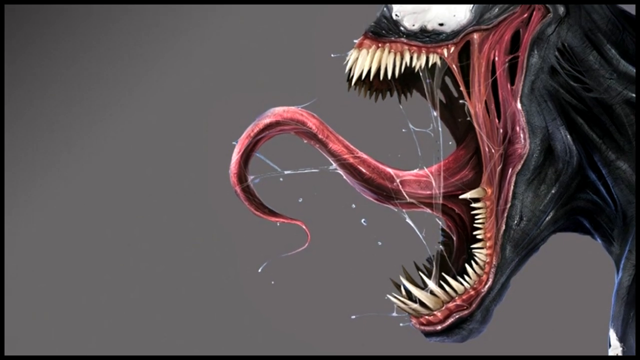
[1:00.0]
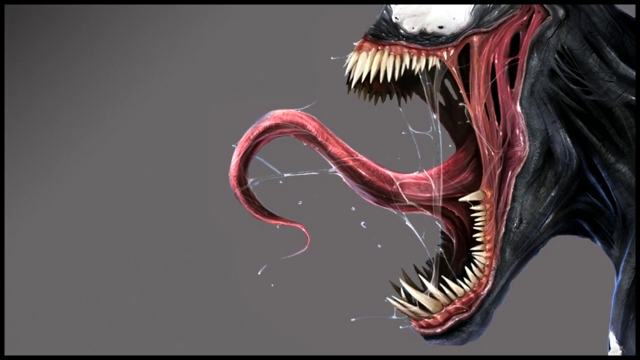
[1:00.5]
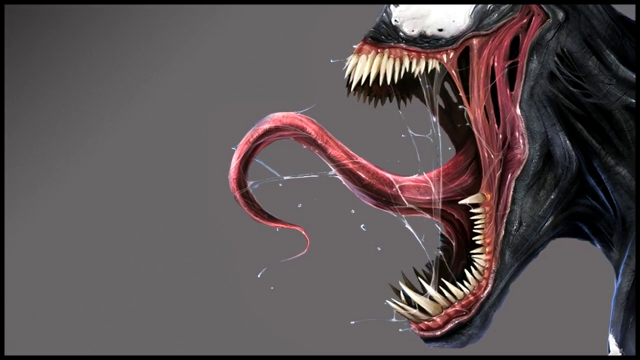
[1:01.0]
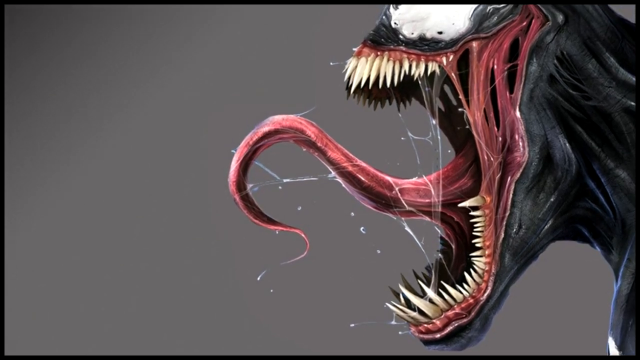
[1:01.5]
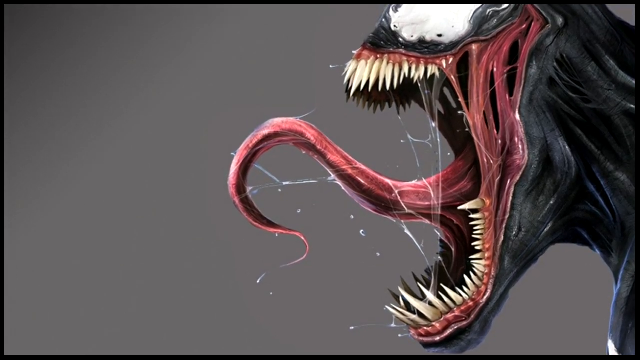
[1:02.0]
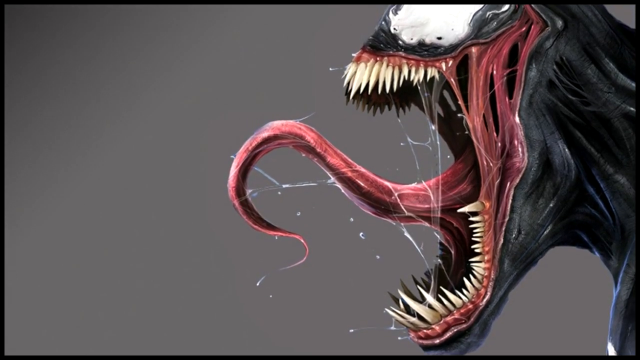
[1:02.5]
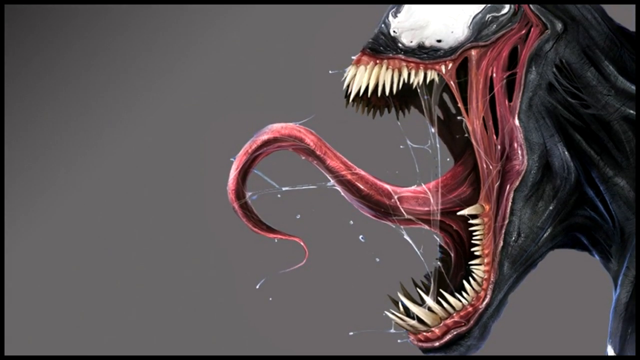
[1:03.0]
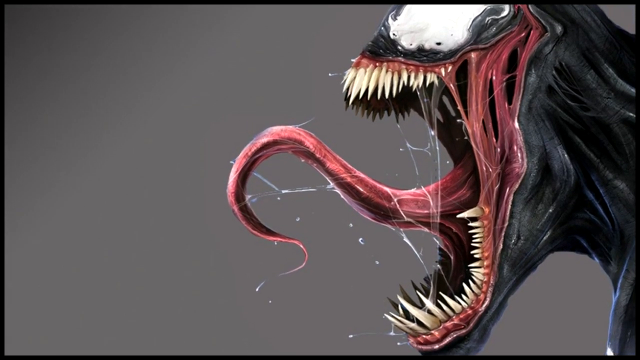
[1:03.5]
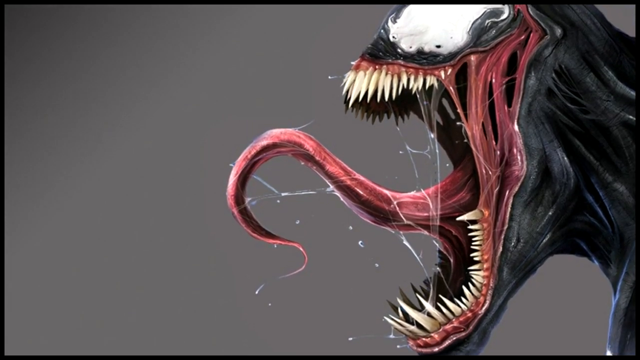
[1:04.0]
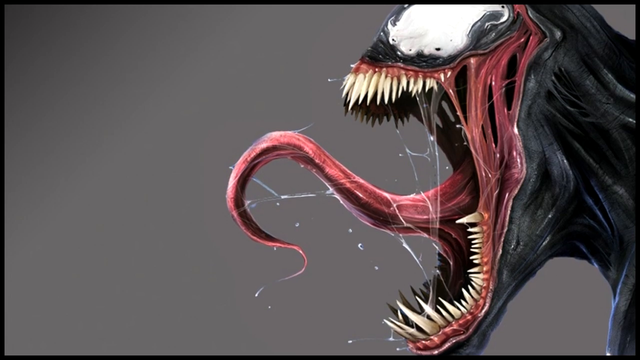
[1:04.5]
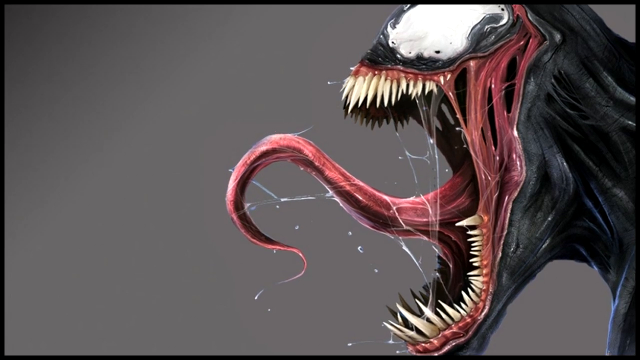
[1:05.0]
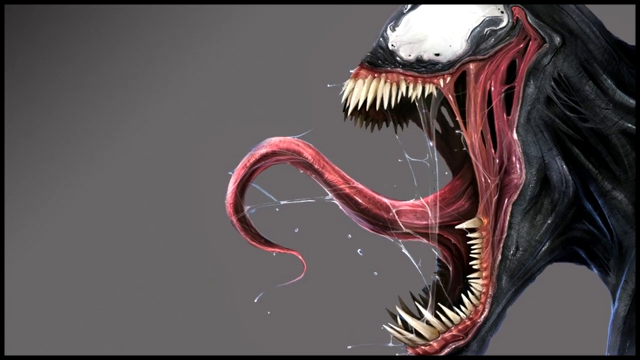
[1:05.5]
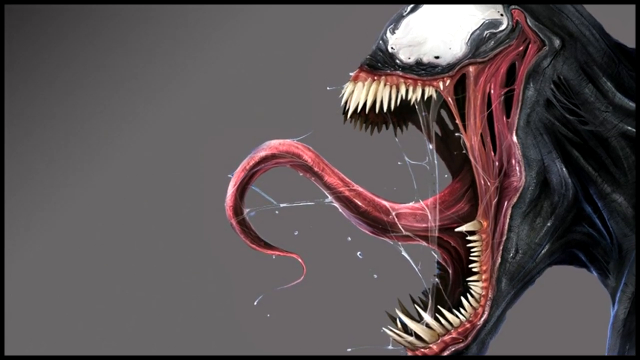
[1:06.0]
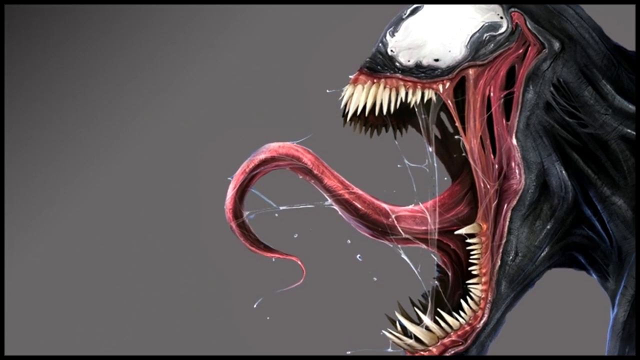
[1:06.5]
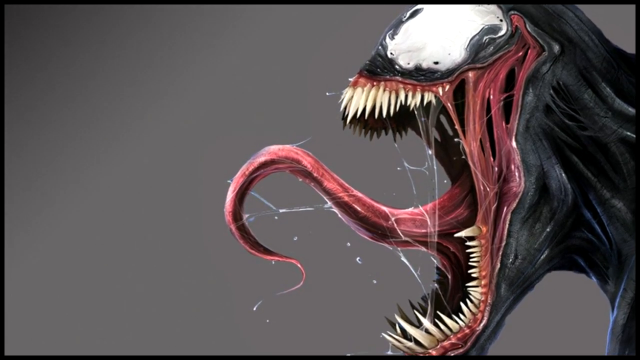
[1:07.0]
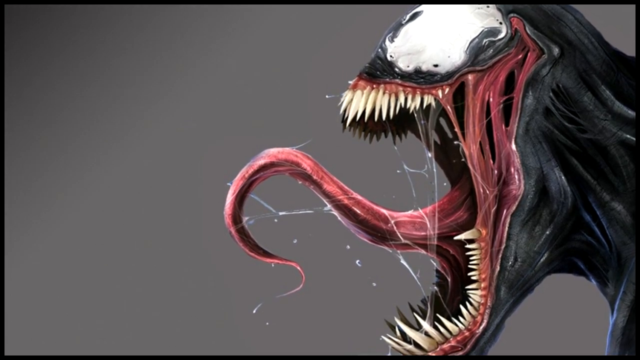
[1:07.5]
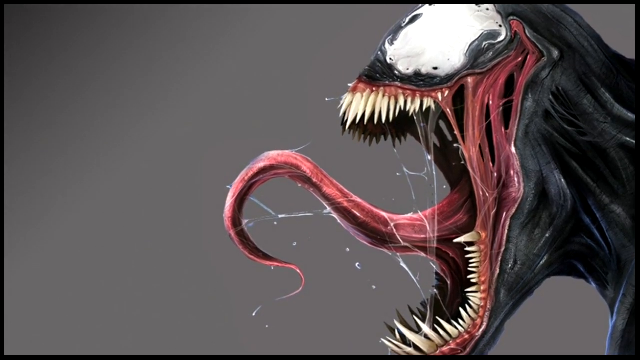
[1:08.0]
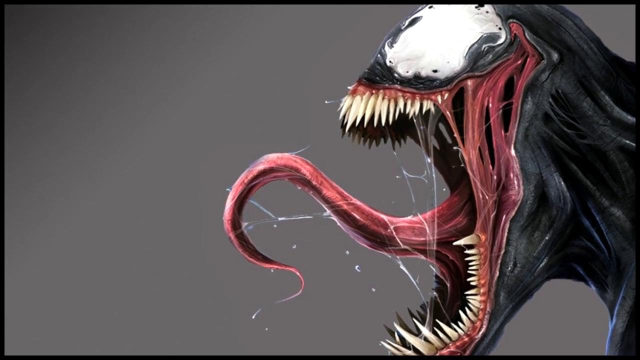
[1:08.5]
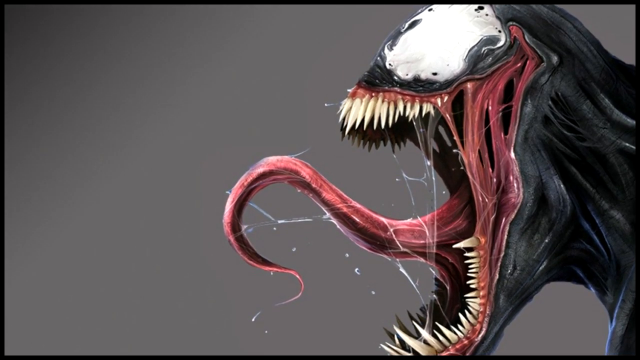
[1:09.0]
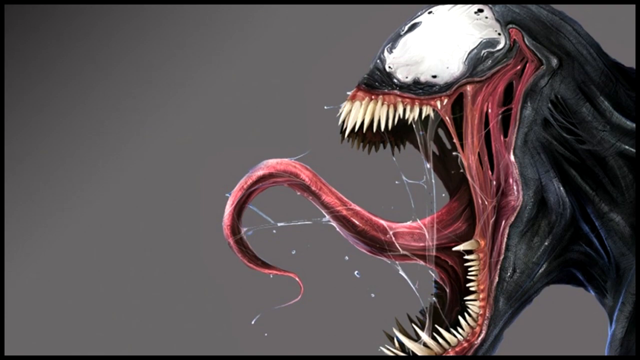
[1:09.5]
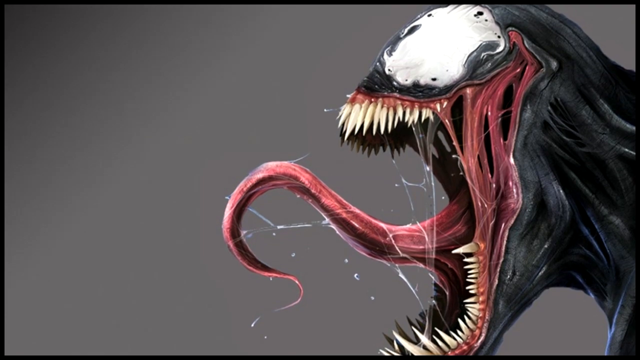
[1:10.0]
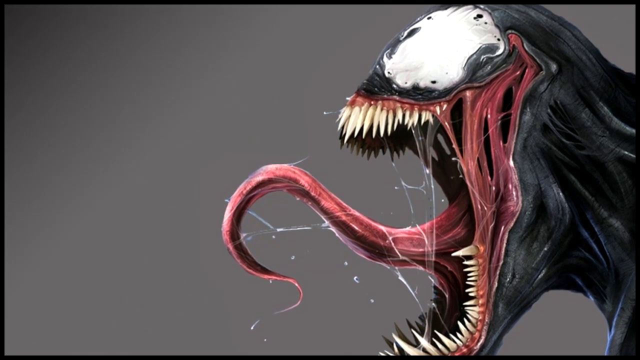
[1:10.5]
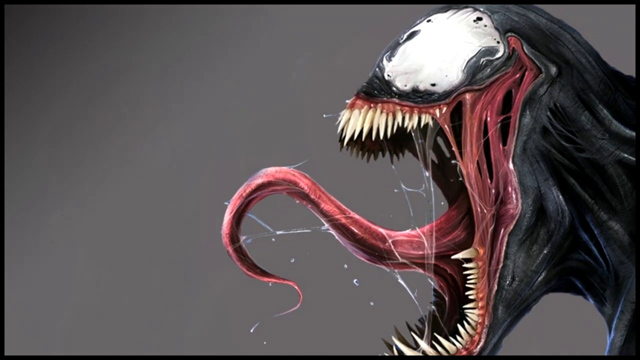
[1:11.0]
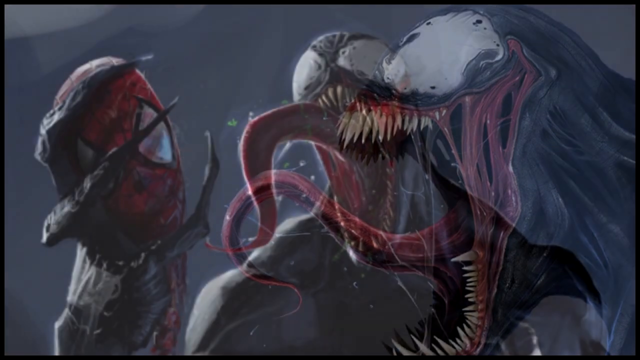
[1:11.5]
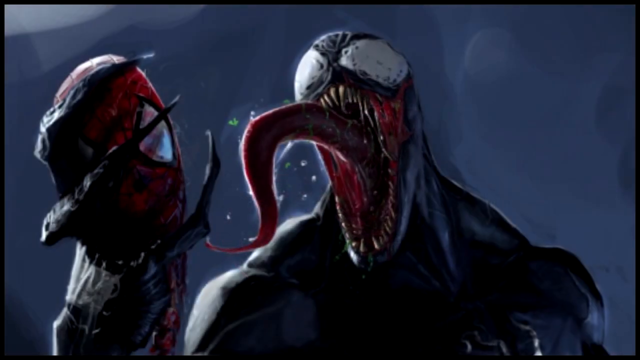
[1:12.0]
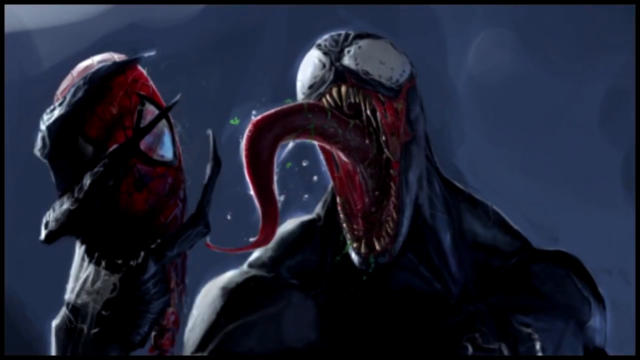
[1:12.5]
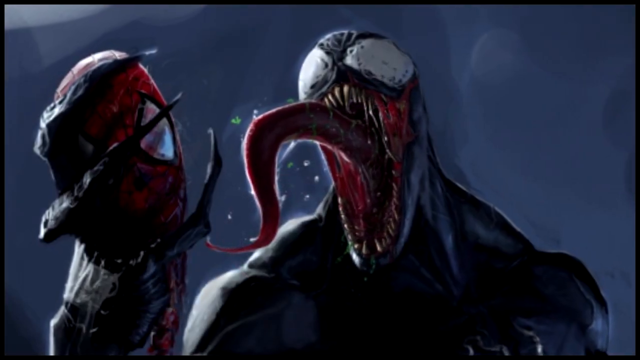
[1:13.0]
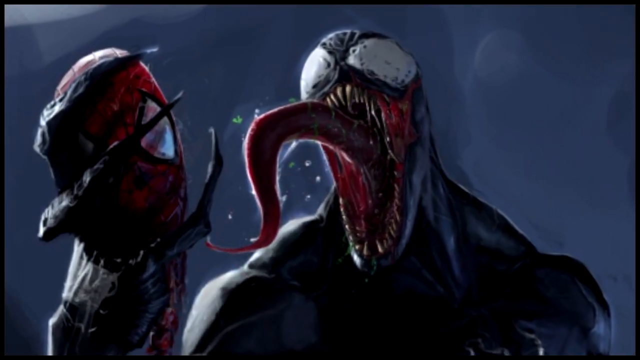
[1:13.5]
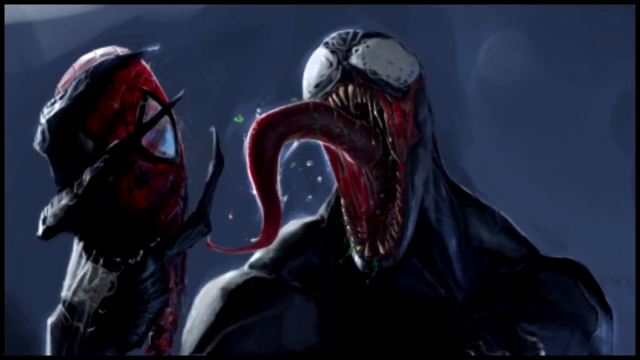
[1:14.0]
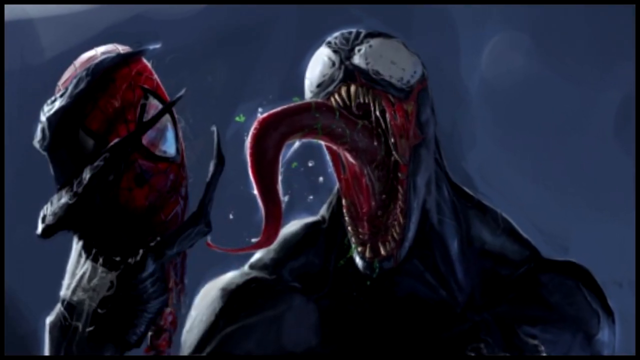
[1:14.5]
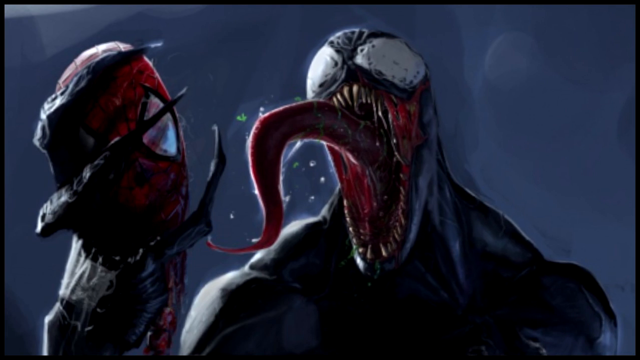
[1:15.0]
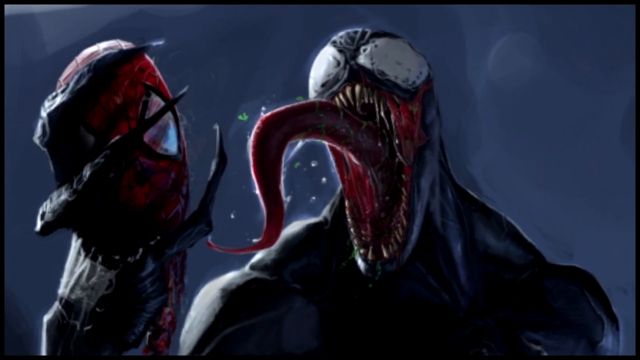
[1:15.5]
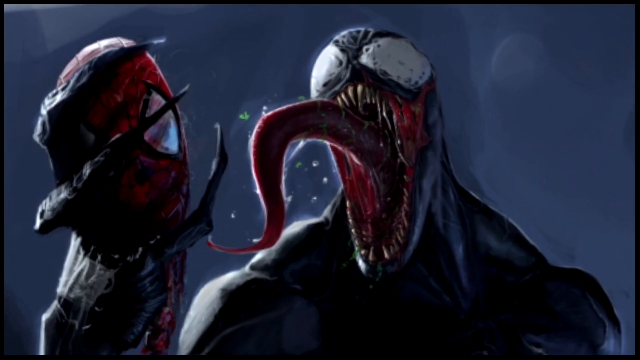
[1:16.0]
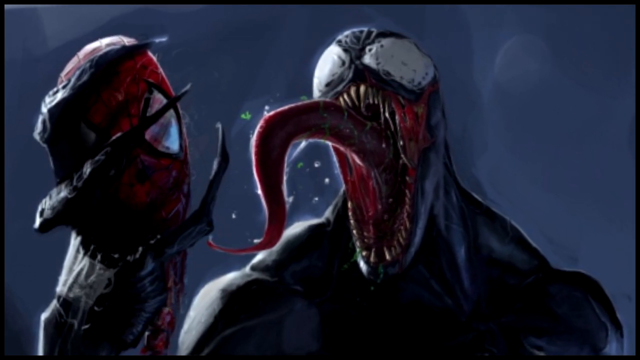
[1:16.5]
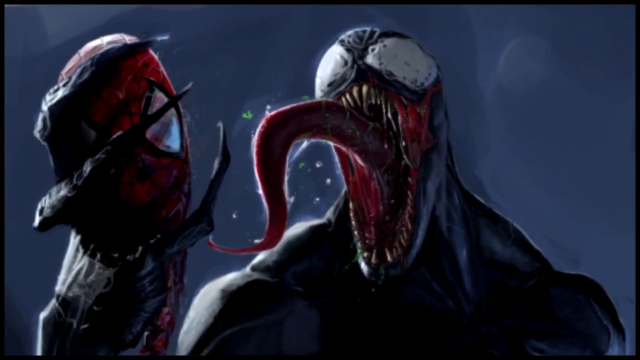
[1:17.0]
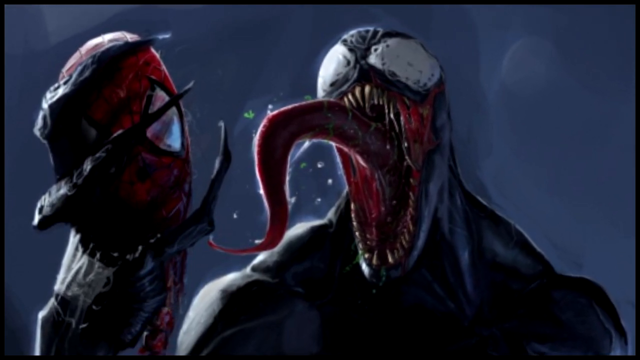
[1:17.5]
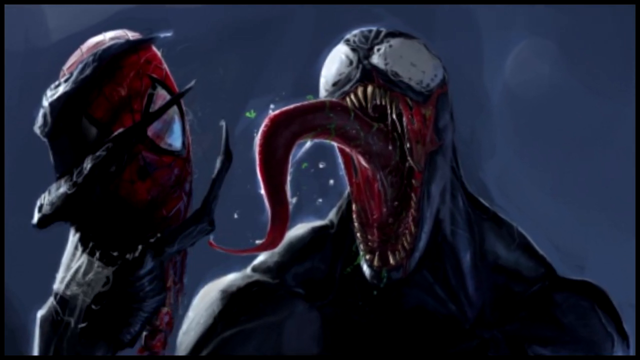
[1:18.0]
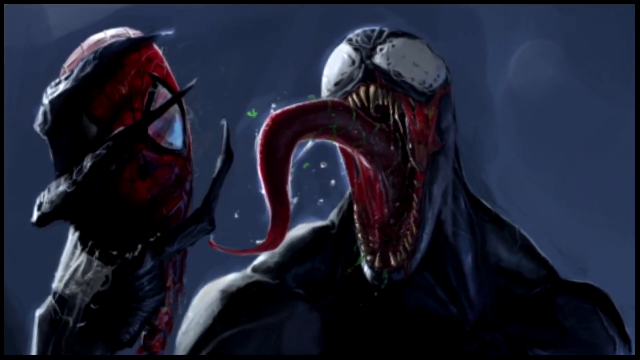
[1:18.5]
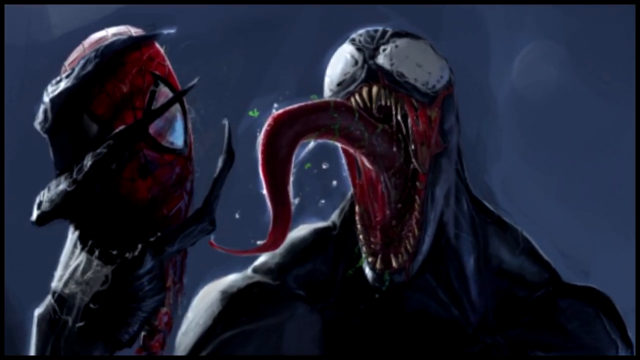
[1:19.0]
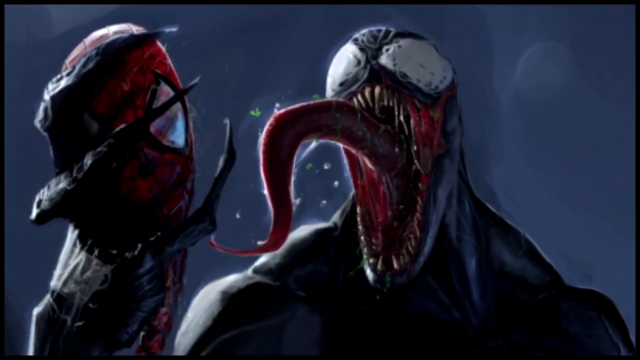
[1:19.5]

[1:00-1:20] The camera slowly moves over an illustrated image on the right side of the frame against a grey background, showing the Venom creature's upper body from the upper chest up, including the neck and mouth, in a left side profile. The mouth is open, with massive, long razor teeth jutting from the gums; the teeth are longer in front than at the back. The mouth is open wider than the neck is long at the back, and red strips that look like muscle are at the corners of the mouth; the mouth seems stretched so far open that it shows muscle tissue. The tongue slinks out, with a thick red-pinkish base that narrows to a fine little point, and webs of spittle are attached to the tongue and run from the tongue to the teeth. The camera slowly moves up until the forehead comes into view, with two white patches where the eyes are supposed to be, though the creature has no eyes. The creature itself is black.